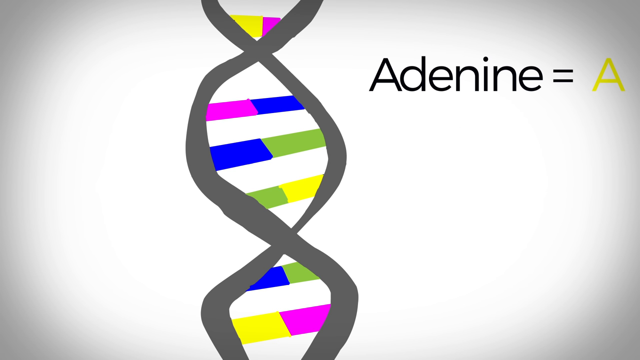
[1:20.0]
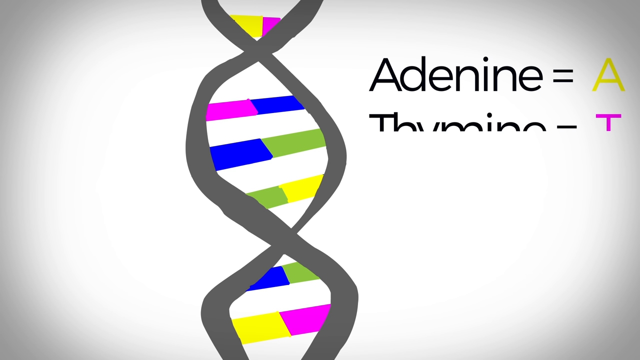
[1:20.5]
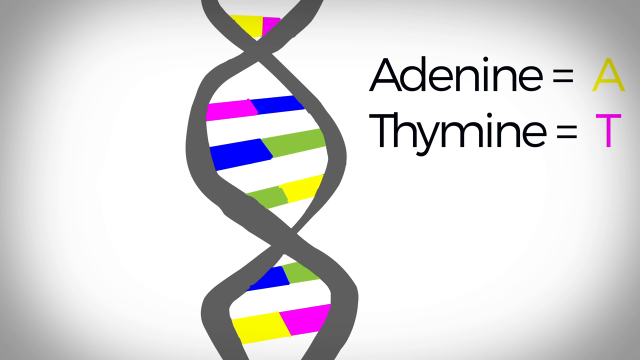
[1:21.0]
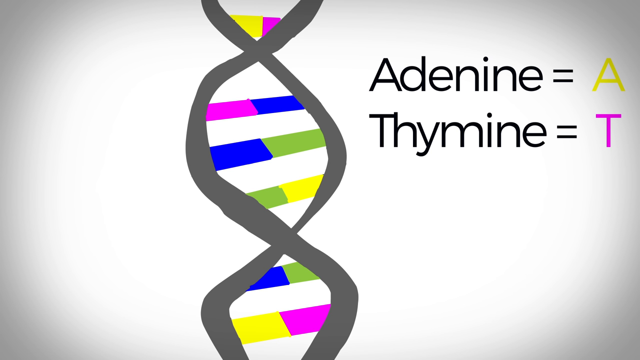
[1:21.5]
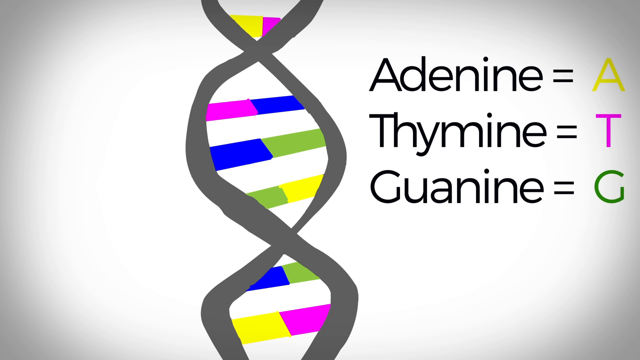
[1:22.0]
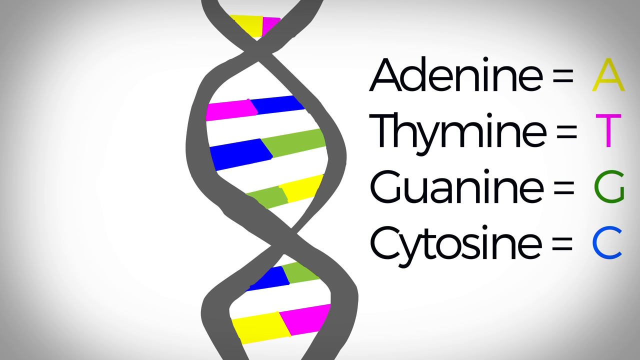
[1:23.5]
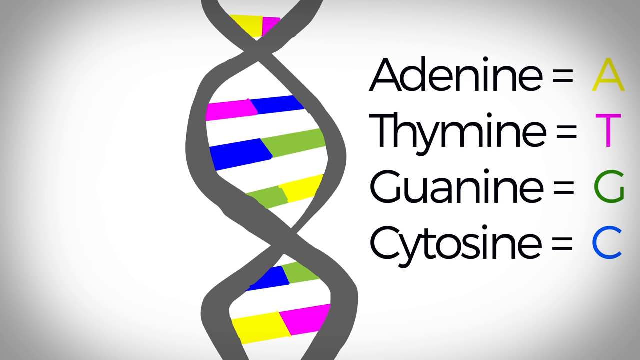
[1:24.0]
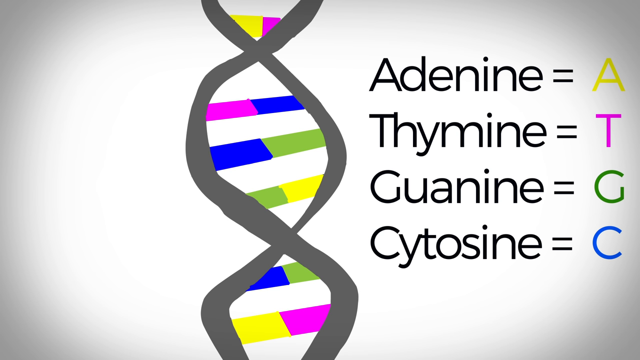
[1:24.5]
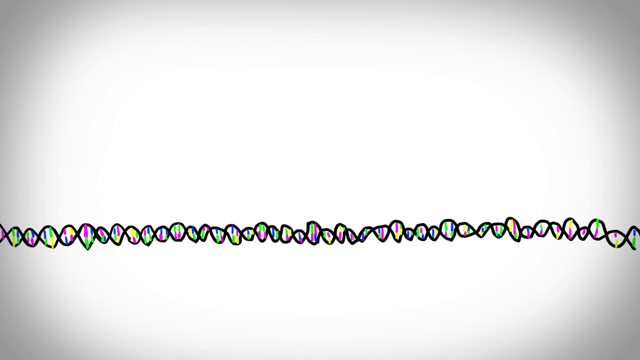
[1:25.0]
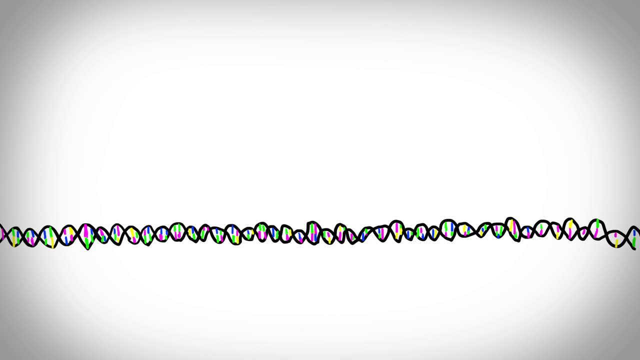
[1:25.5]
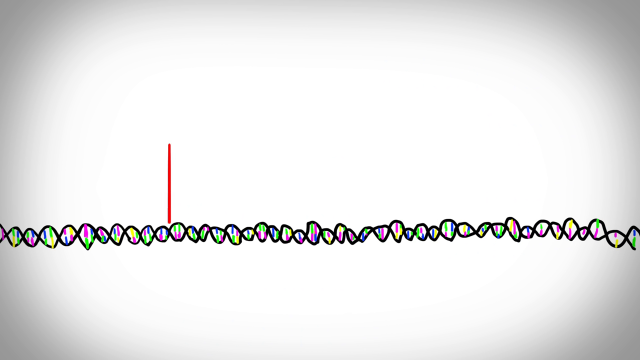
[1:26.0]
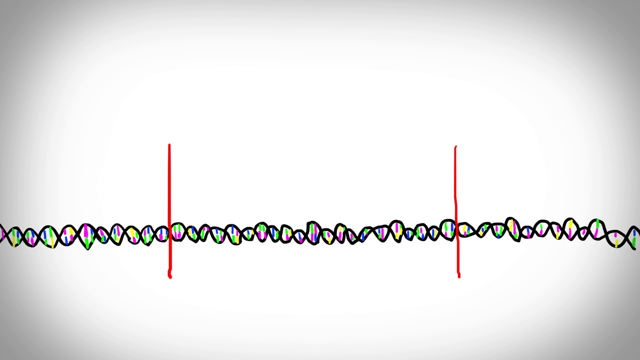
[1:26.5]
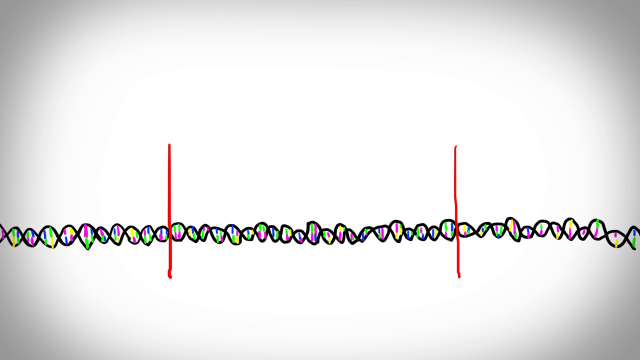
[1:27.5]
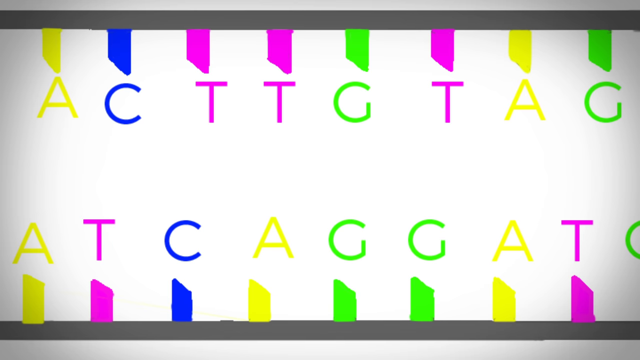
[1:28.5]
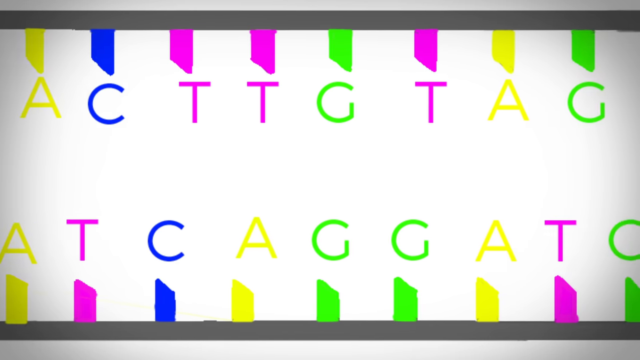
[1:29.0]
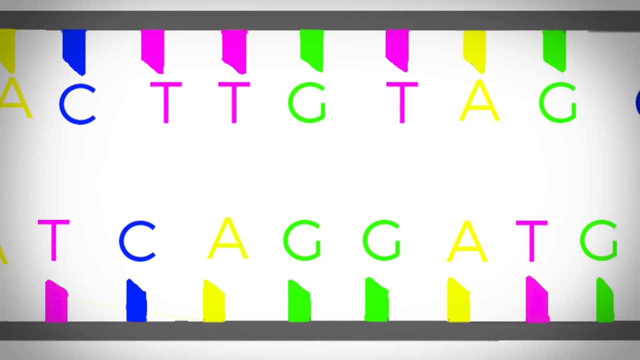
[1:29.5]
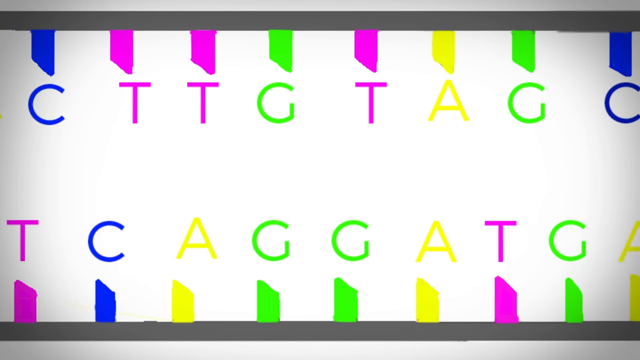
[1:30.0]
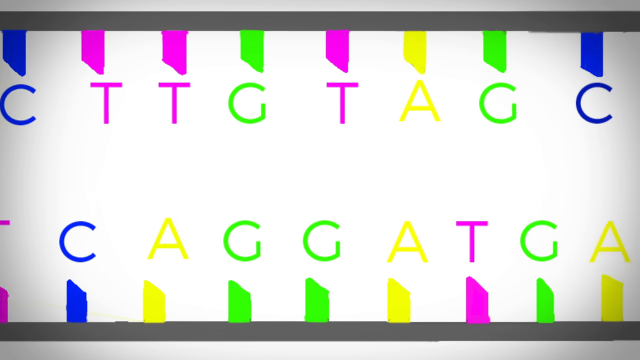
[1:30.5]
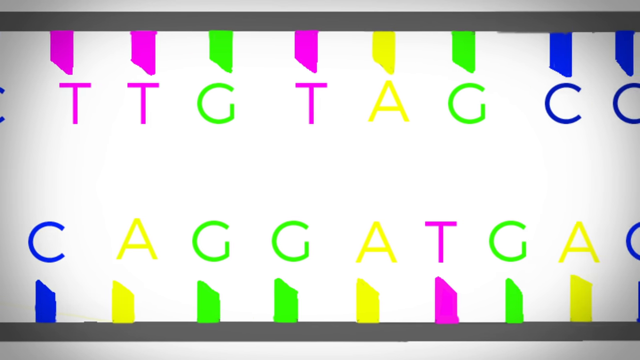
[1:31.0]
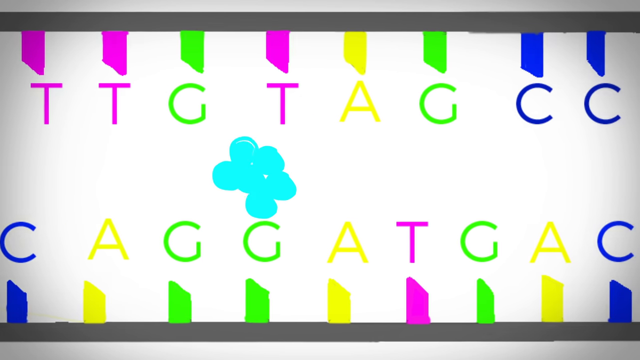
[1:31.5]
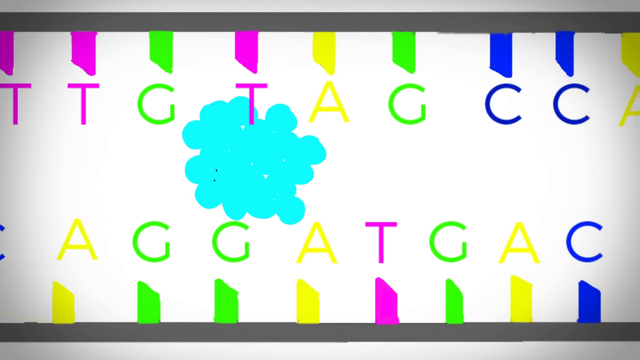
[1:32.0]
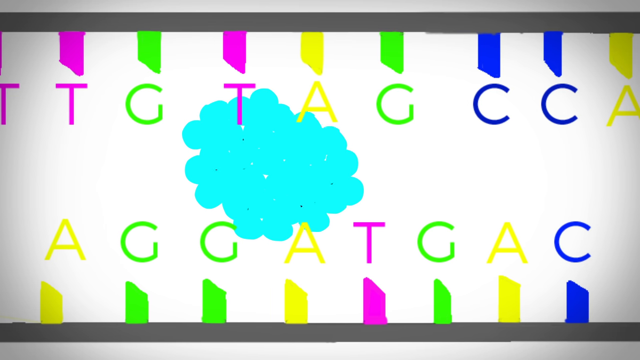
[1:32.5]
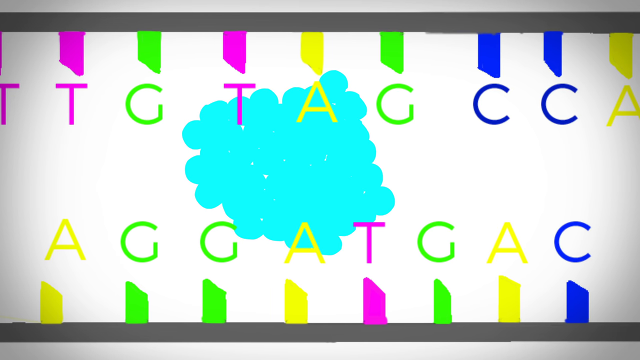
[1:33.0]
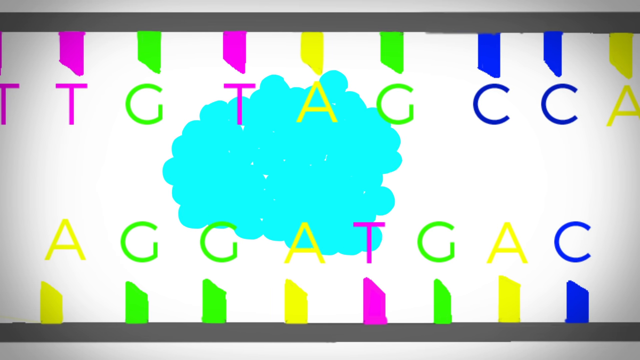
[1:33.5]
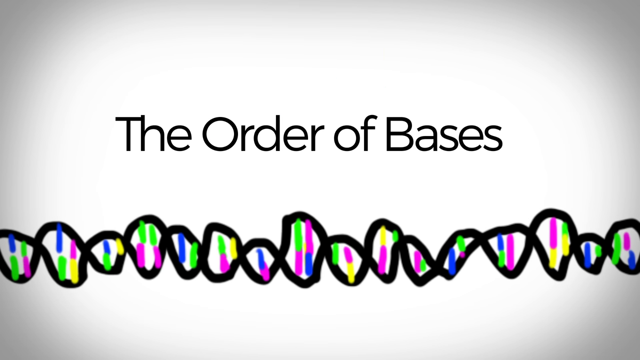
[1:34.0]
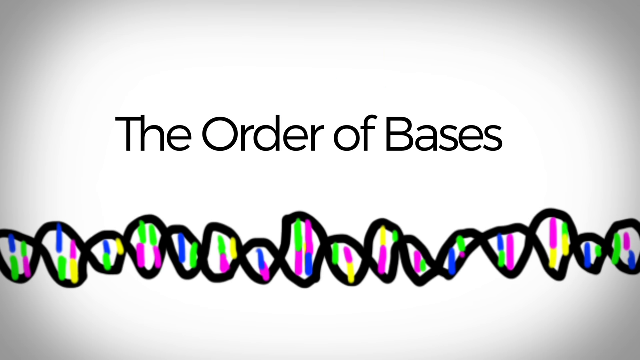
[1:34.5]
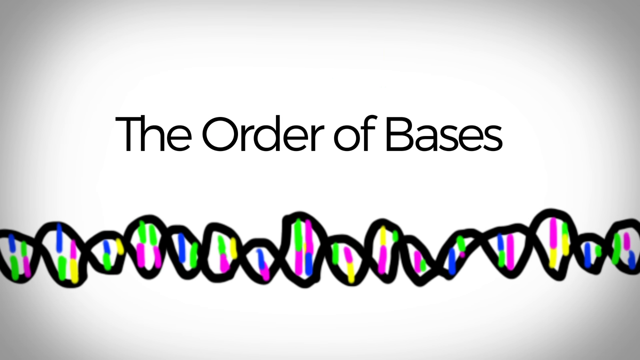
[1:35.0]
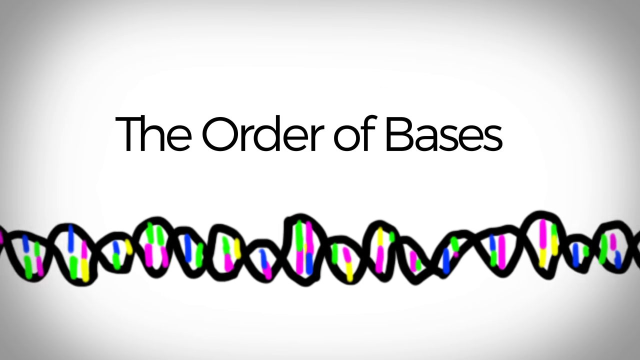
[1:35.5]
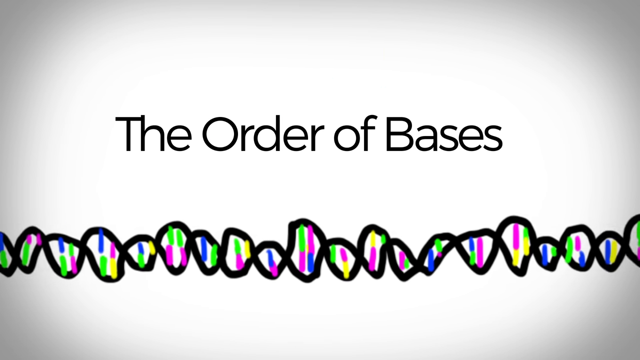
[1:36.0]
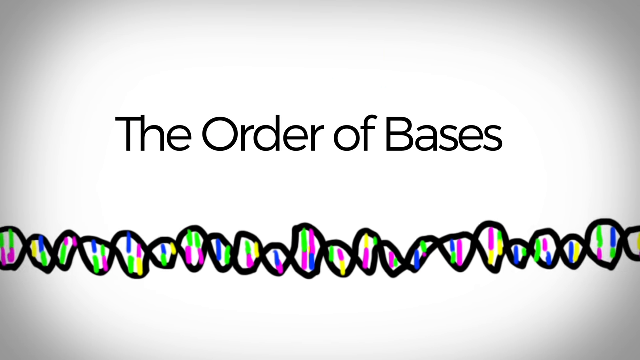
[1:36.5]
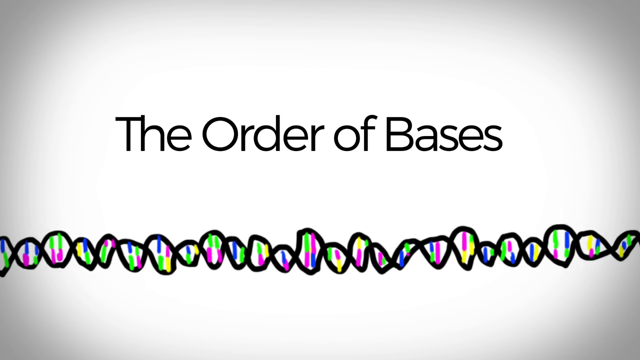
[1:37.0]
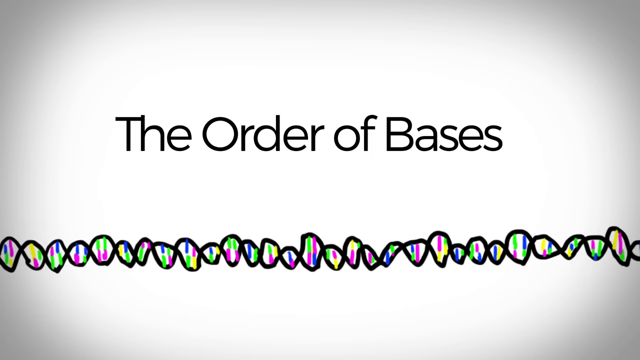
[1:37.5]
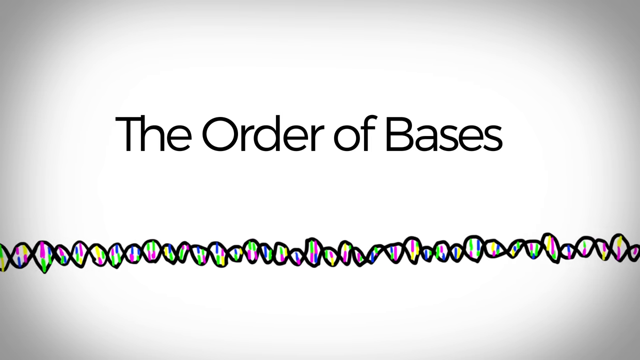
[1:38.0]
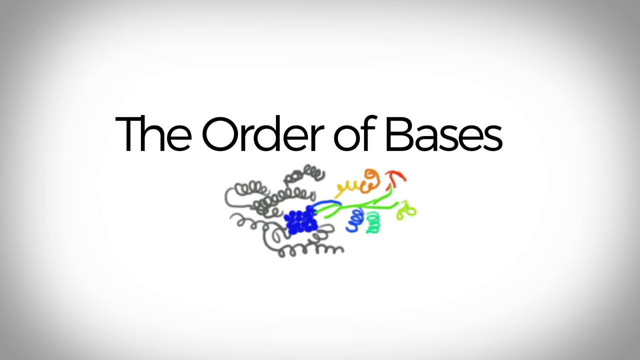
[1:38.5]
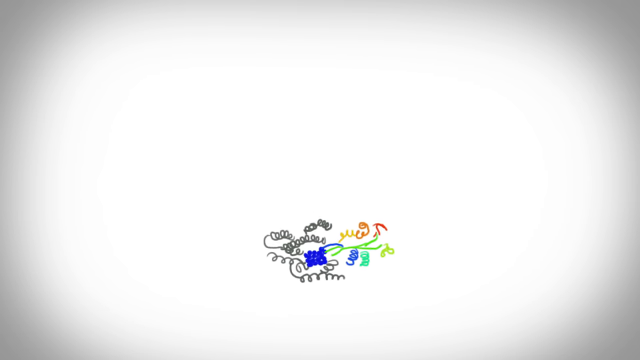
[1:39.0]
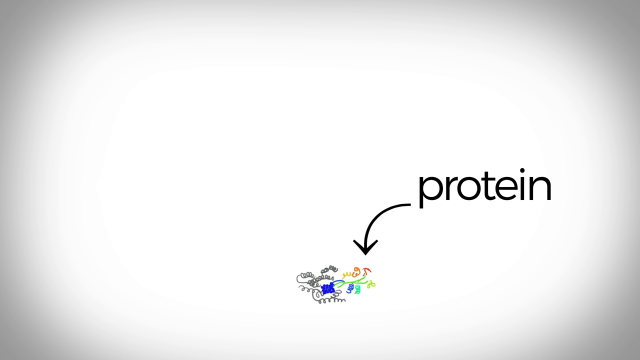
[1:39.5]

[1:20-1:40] On a white background, a double helix representing a DNA strand runs down the center of the screen, connected by lines. Each line has two colors: yellow and pink, pink and blue, blue and green, or green and yellow. To the right it says "adenine" in black letters, an equals mark in black, and an "A" in yellow. Below that the word "thiamine" appears with "= T", the T in pink; below that "guanine" with "= G", the G in green; and below that "cytosine" with "= C", the C in blue. A white screen then shows a double helix running from left to right with all the colors of the four bases. Two red lines appear, one about a third of the way across the screen and one about two-thirds of the way across. The view switches to a white screen with two rows of letters, A, C, T, T, G, T, A, G, with dashes coming from the top and bottom of the screen above and below each letter. It pans to the left and the letters repeat, then a bunch of blue dots appear in the center of the screen, forming something that looks kind of like a cloud. Next, a white screen says "the order of bases", with a strand of DNA running left to right across the bottom. Then a bunch of squiggly lines appear, the word "protein" appears, and an arrow points to "protein".